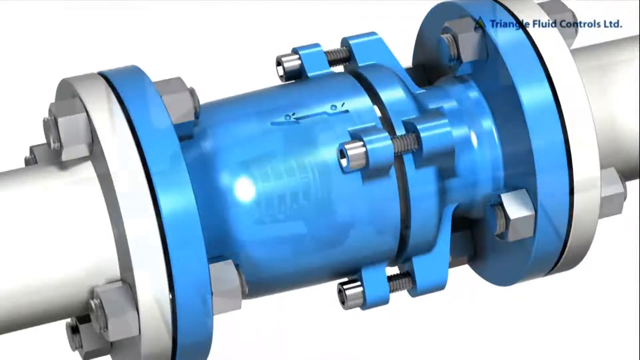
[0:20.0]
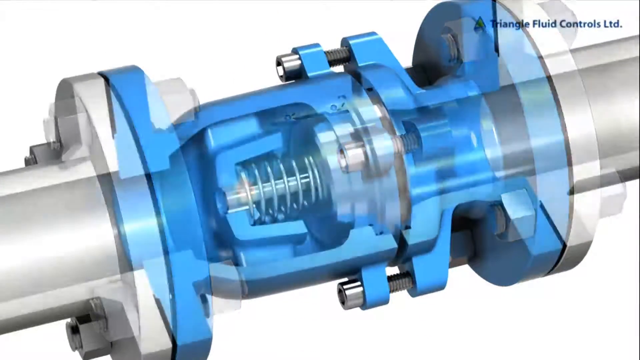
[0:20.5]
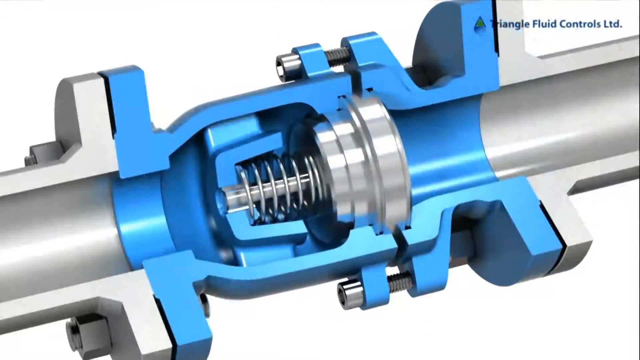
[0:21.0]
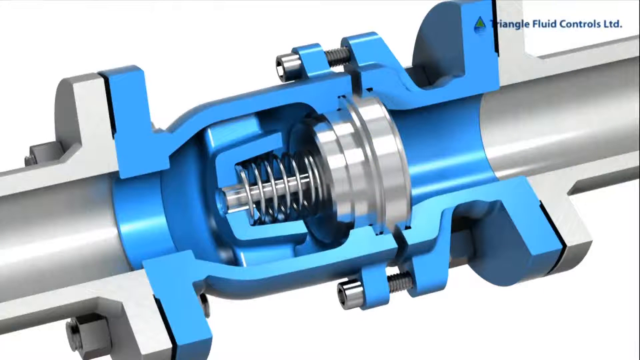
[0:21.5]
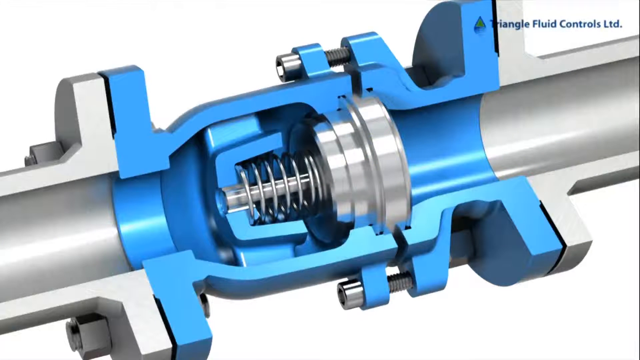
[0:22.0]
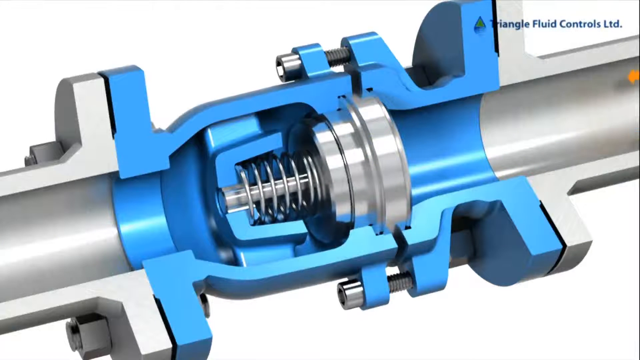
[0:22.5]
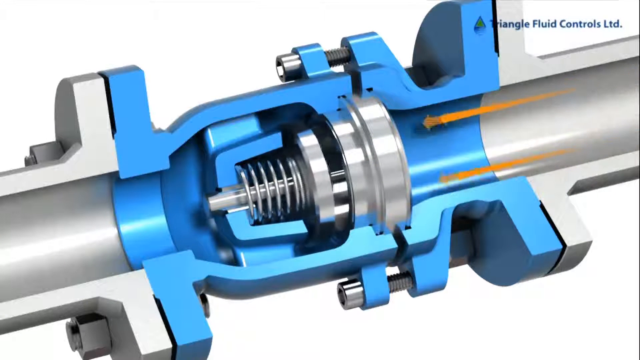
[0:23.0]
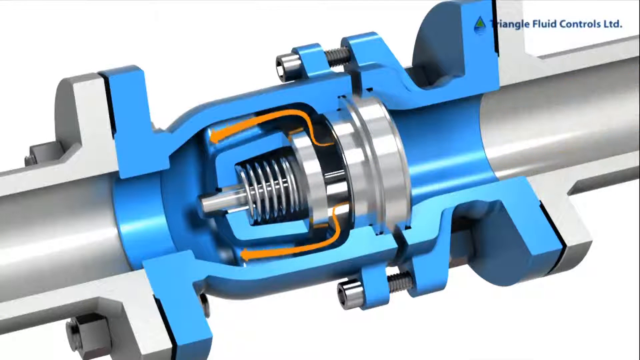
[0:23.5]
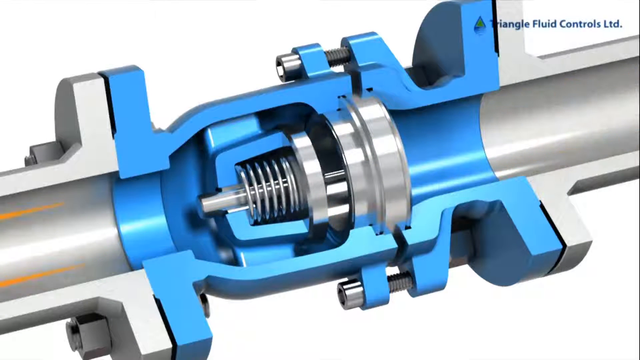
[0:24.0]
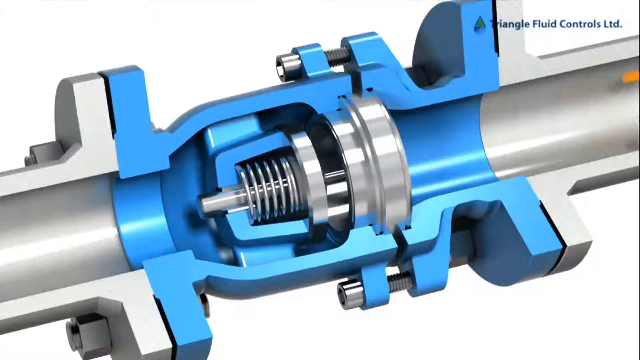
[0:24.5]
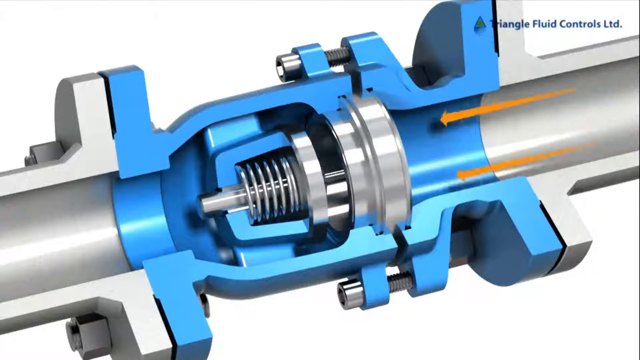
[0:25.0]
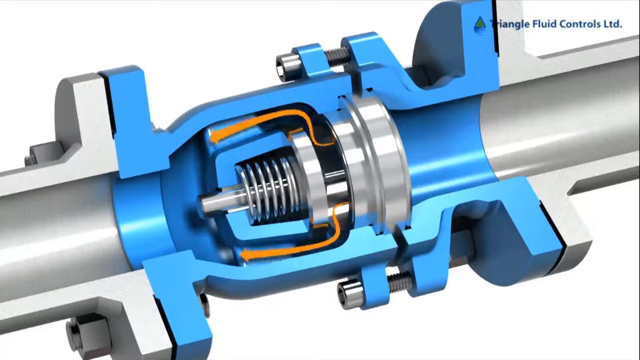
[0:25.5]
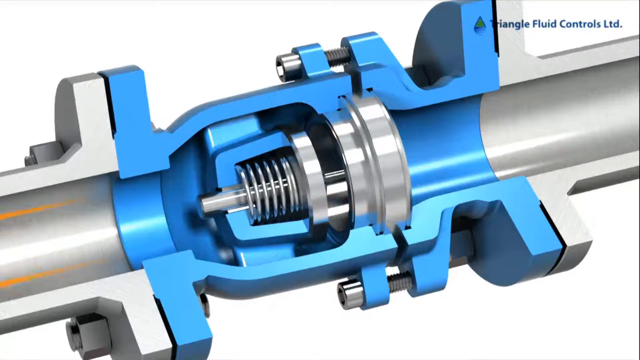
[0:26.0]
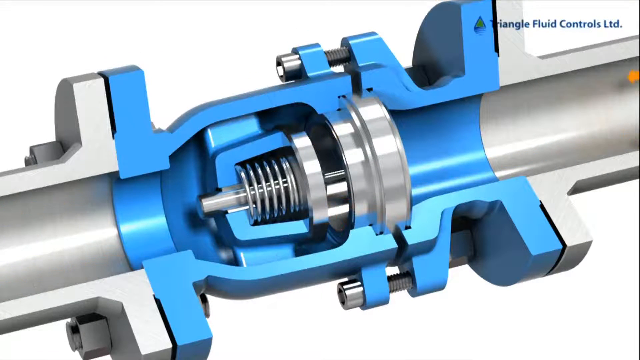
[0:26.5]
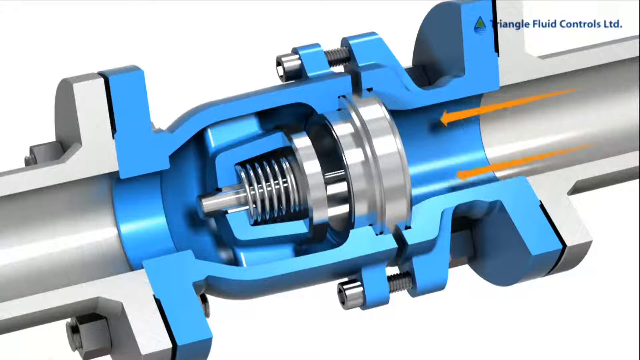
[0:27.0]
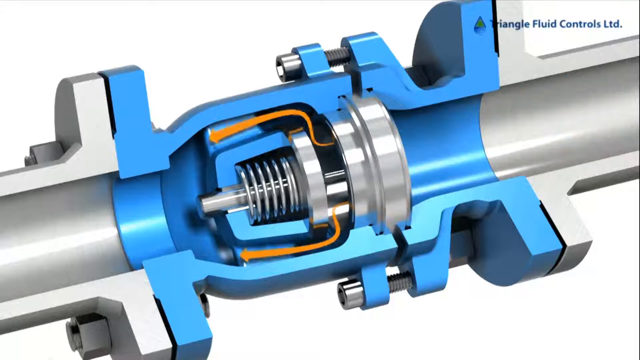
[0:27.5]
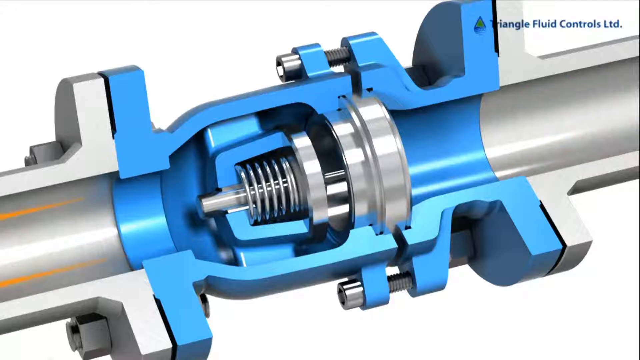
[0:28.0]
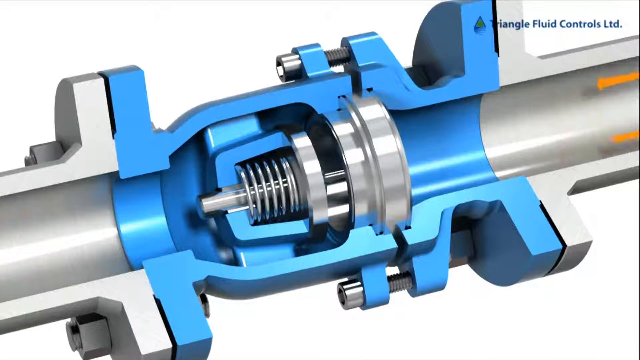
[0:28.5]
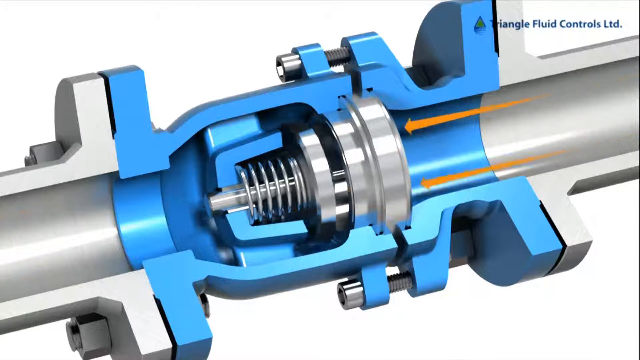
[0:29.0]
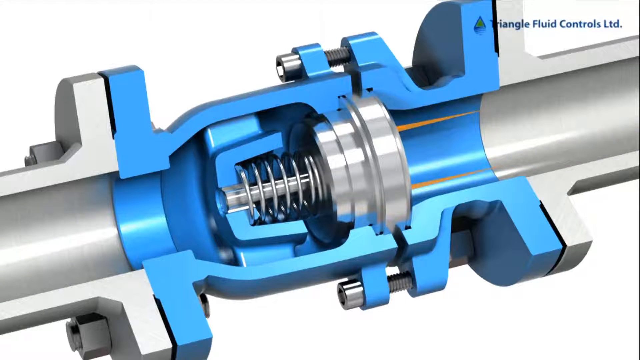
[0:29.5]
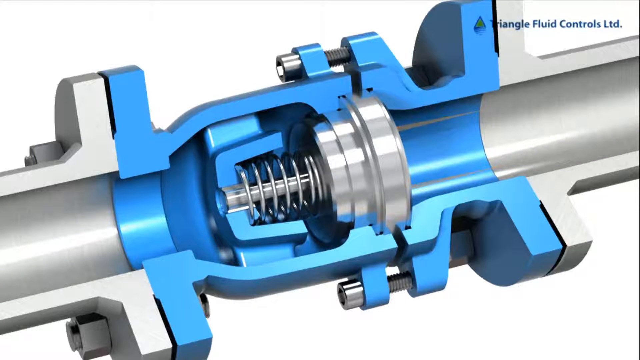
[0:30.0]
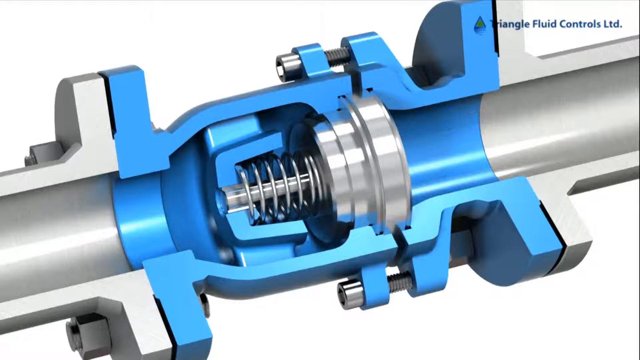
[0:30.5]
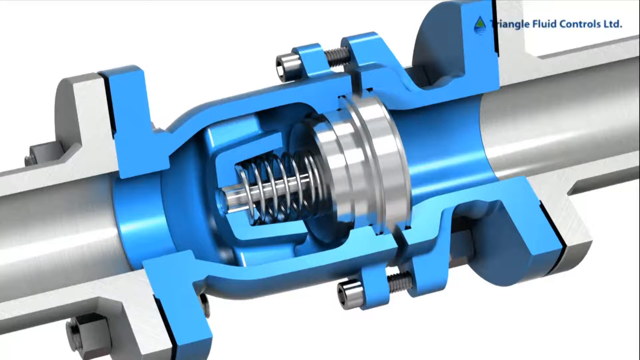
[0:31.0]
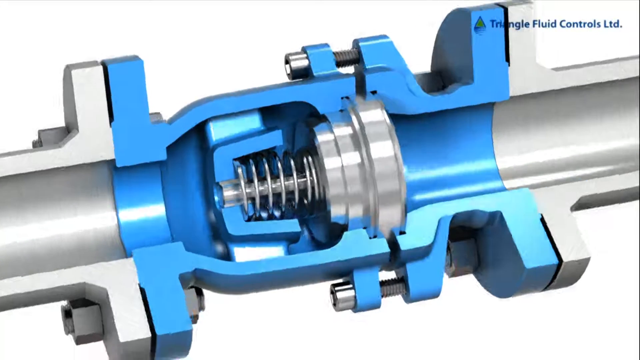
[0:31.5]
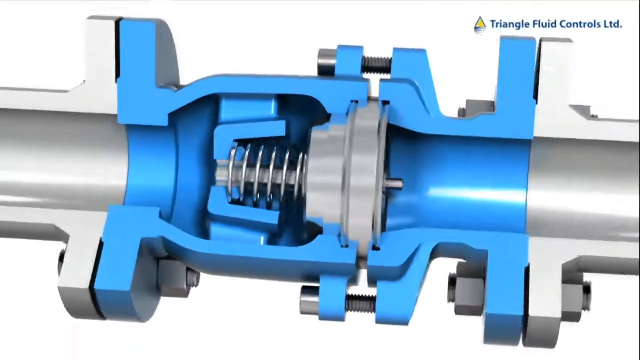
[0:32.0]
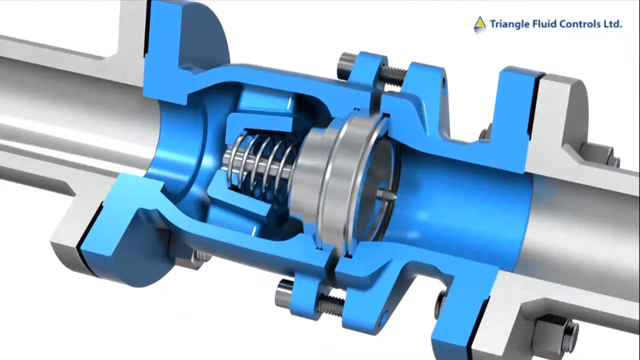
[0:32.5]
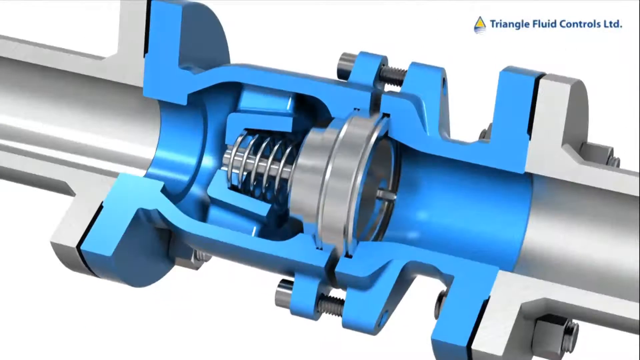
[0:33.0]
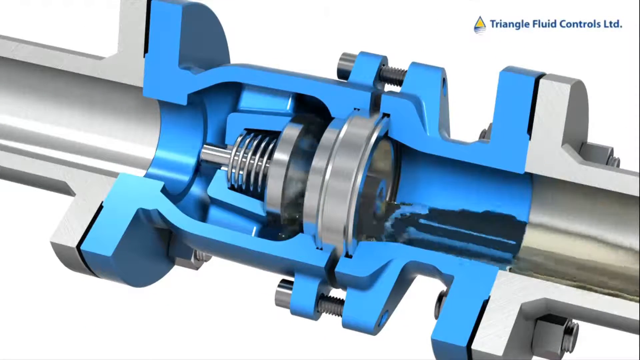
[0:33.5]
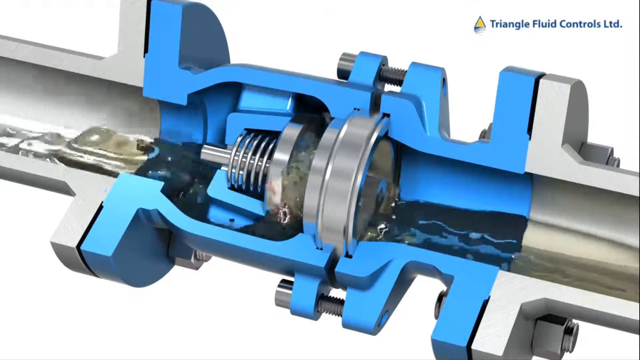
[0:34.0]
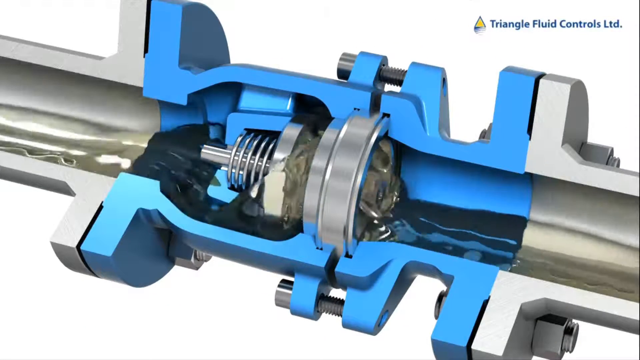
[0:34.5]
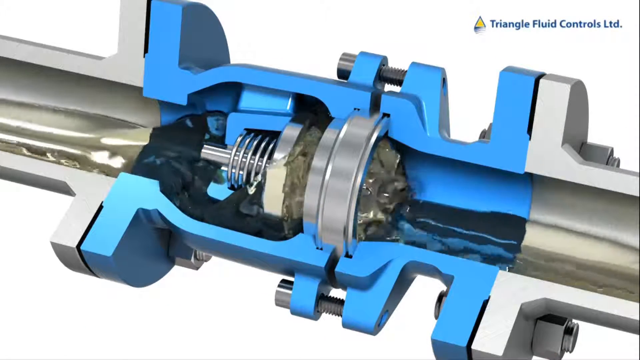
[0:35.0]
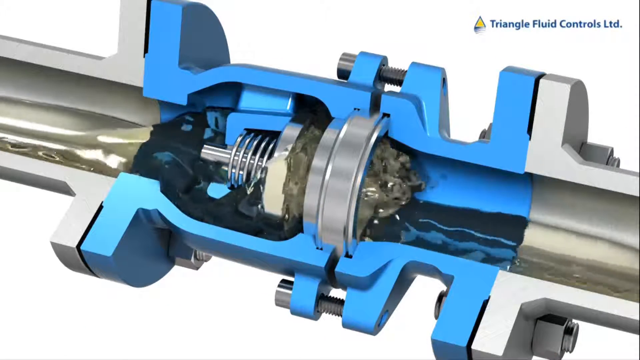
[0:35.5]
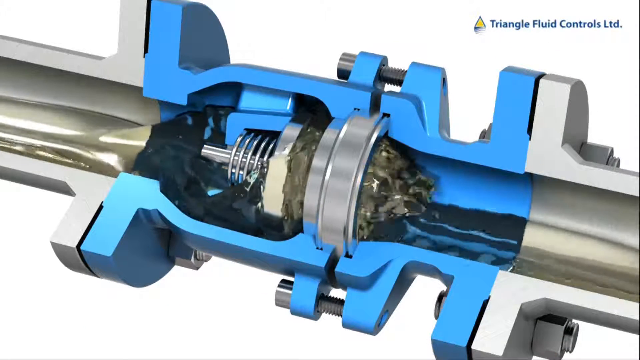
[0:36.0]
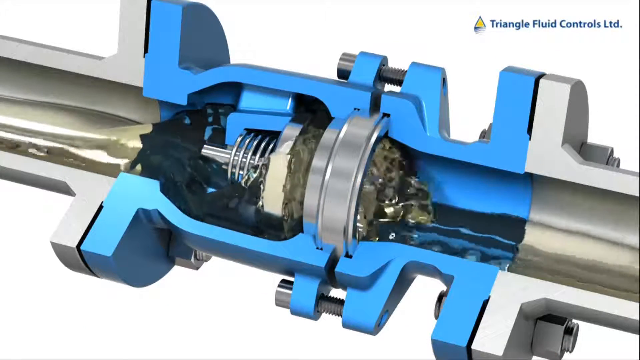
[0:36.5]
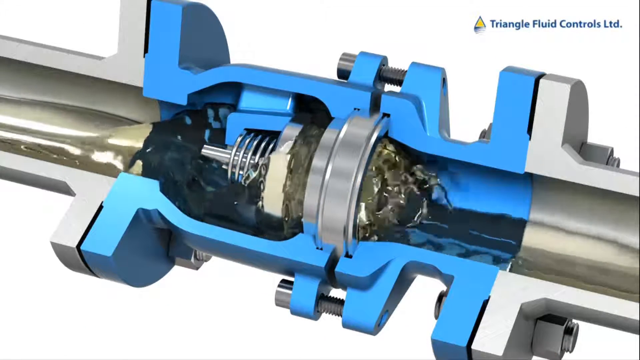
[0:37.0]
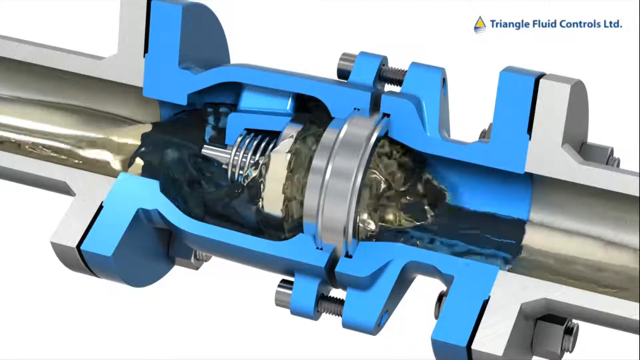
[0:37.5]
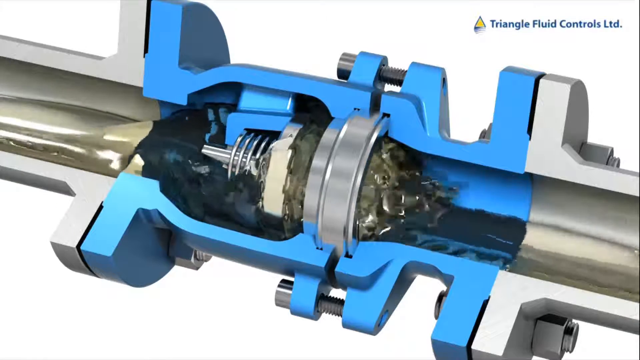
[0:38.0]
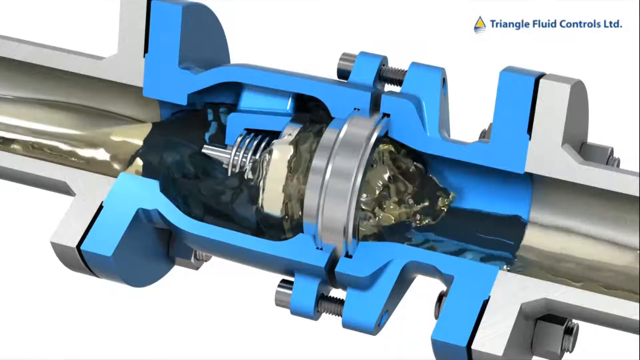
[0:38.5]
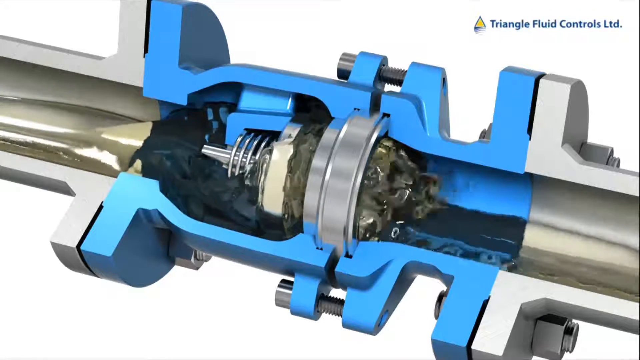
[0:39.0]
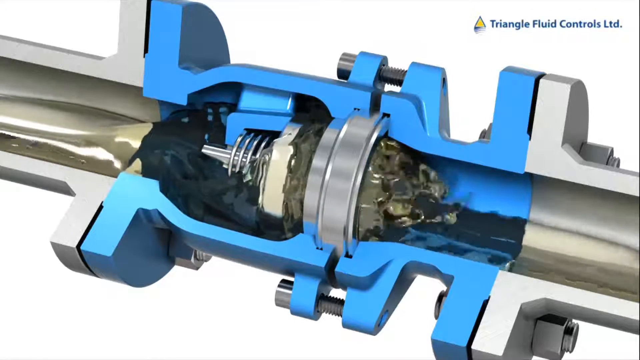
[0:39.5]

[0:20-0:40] There is a spring inside the valve, between the parts of the check valve, and arrows show how it operates. When the spring is compressed, the fluid flows to the other side of the valve; when the spring widens back to its normal shape, the fluid stops flowing. The fluid looks greasy and greenish, not like clean water; it might be oil, dirty fluid or water. An arrow shows where the fluid goes, and the fluid flows in the same direction as the arrow.